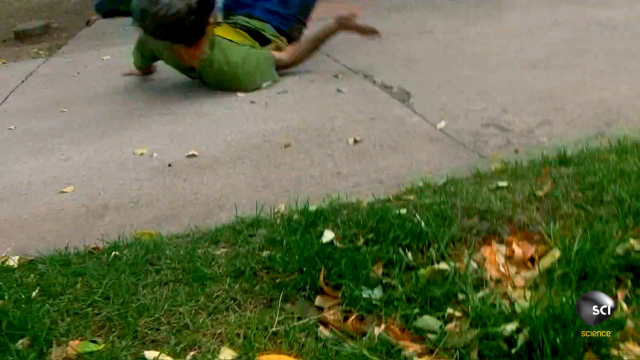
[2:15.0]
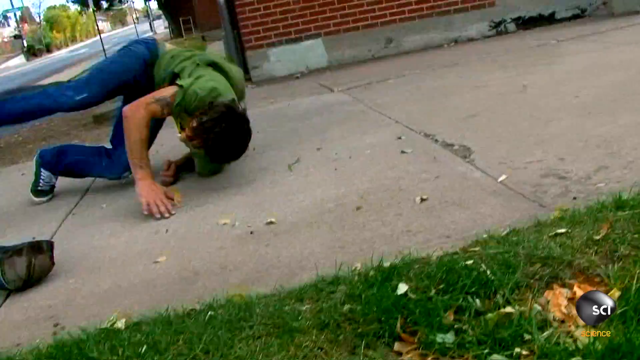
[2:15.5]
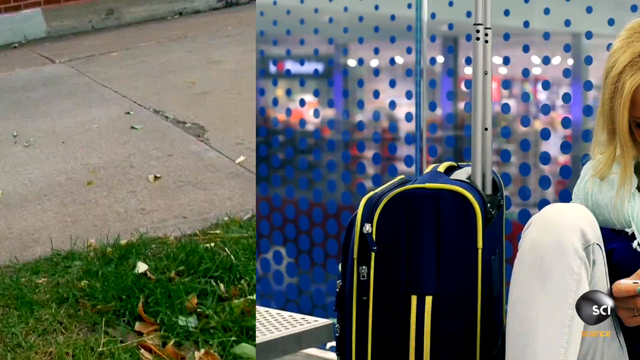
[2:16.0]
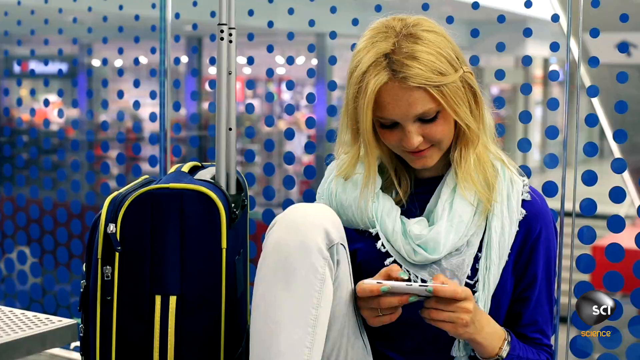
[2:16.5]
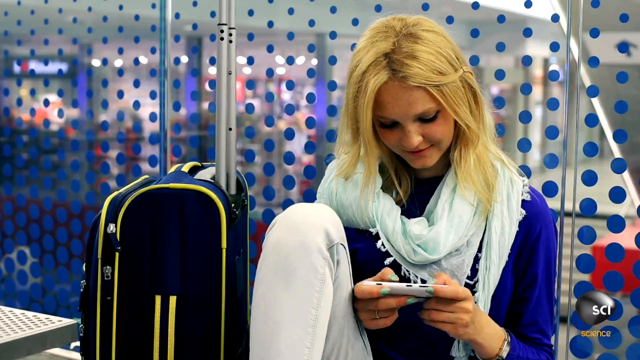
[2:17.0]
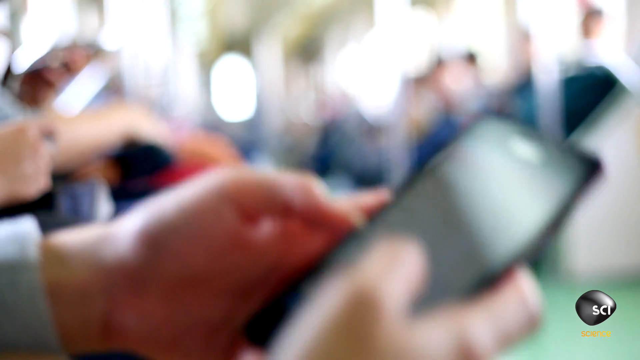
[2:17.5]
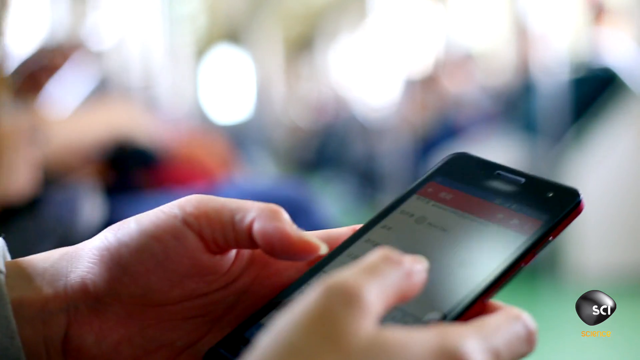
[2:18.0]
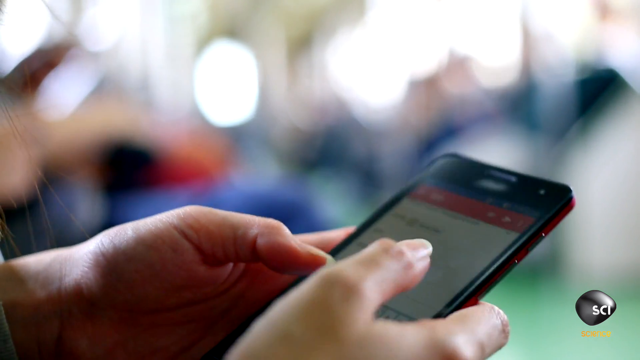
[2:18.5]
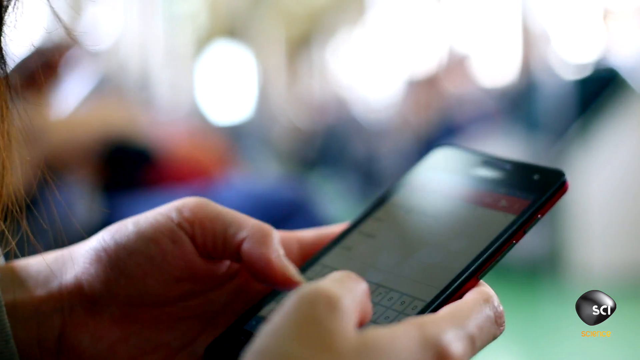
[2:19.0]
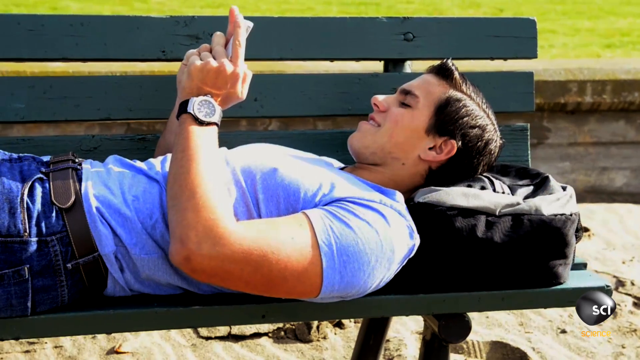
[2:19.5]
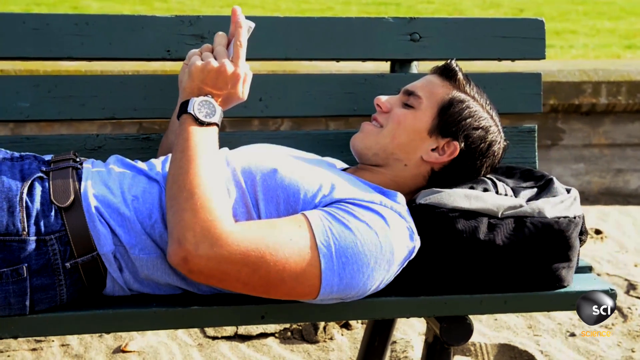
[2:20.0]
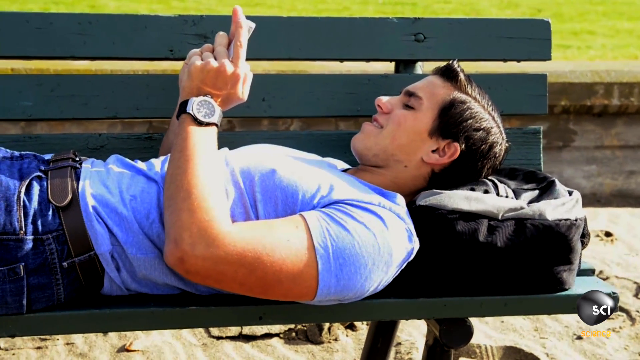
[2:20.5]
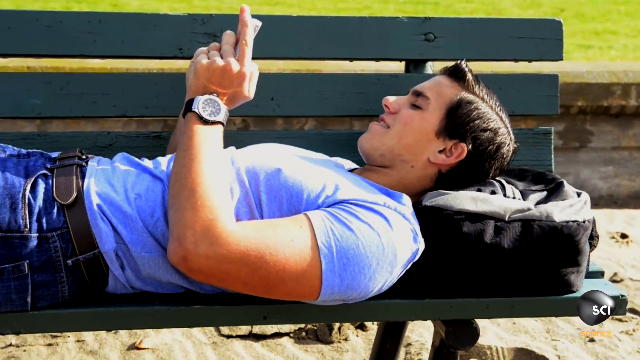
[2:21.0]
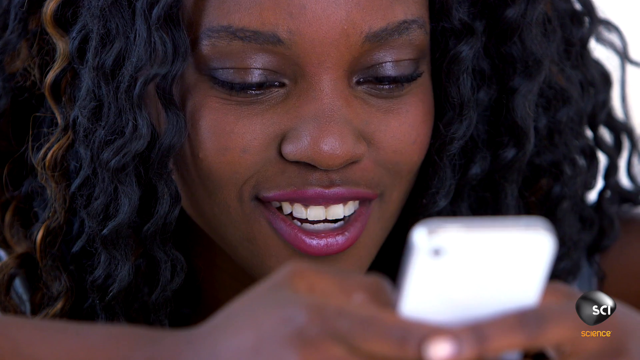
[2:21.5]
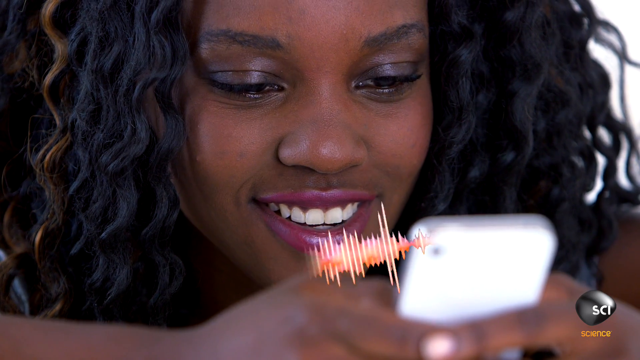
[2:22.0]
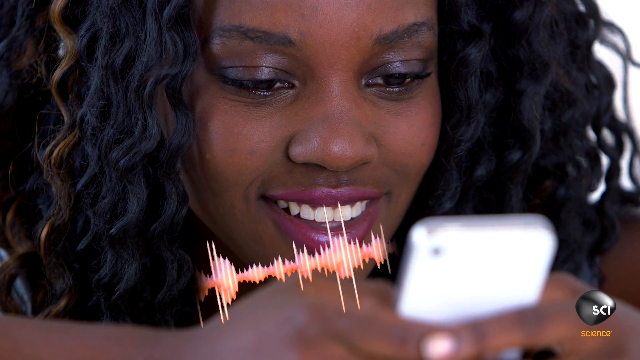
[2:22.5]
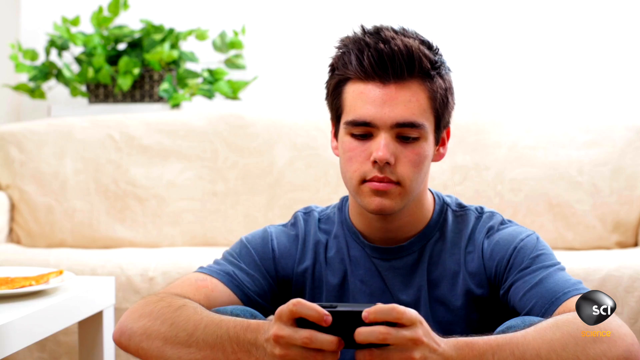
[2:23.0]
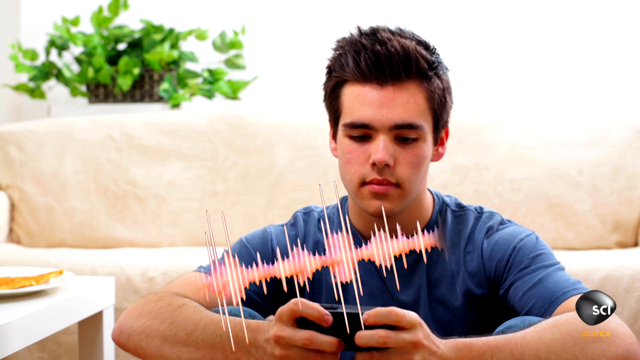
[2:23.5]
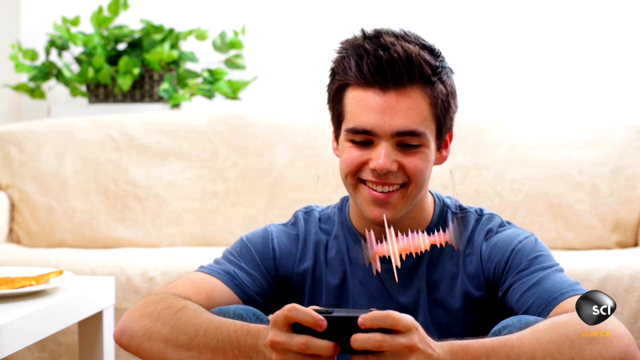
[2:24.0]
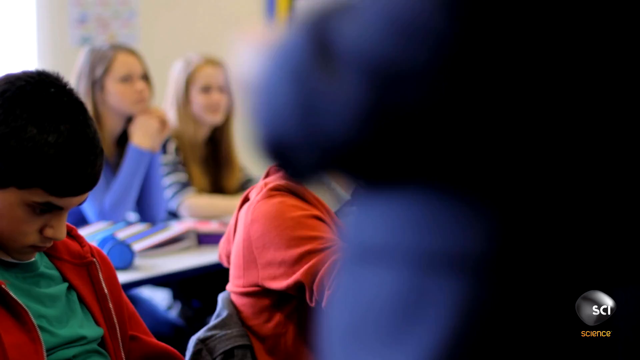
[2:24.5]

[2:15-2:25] The boy on the skateboard falls on his back and rolls. Very fast cuts then show young people on mobile phones: a blonde girl sitting with a suitcase next to her, as if in an airport or train terminal, someone on the subway, a boy lying on a park bench with his head on his backpack like a pillow, and someone sitting in a living room. The red sound wave graphic appears coming out of a phone. No one visibly wears headphones, the settings are mostly public places, and they all look pretty happy, smiling at their phones.